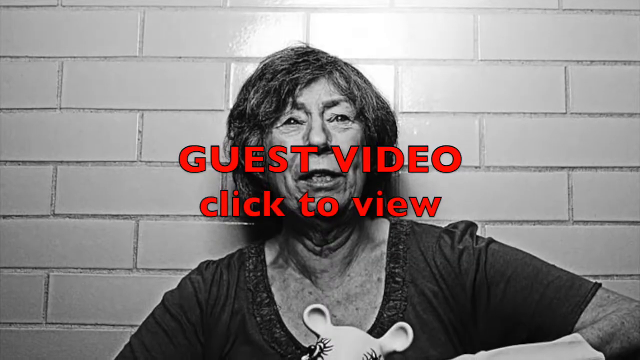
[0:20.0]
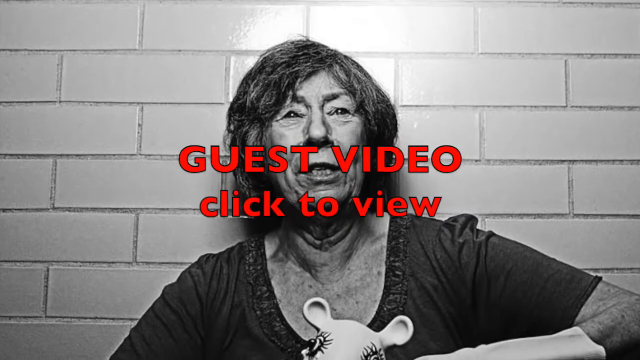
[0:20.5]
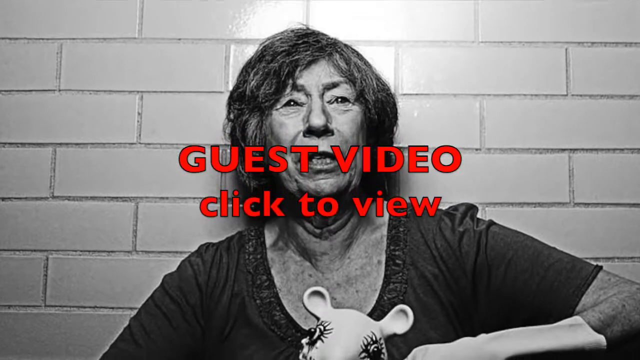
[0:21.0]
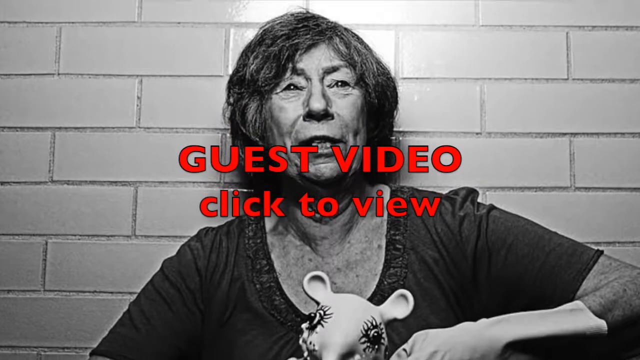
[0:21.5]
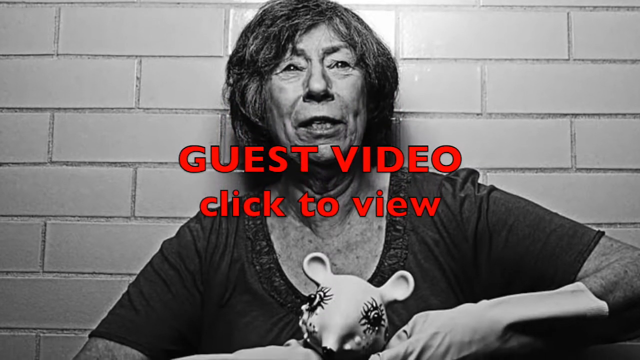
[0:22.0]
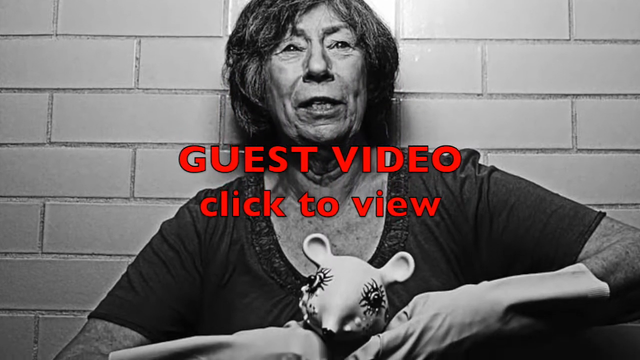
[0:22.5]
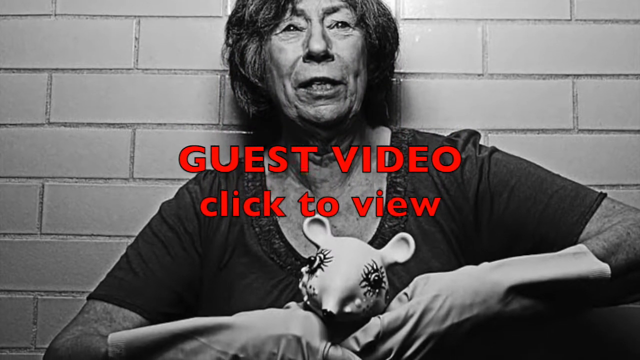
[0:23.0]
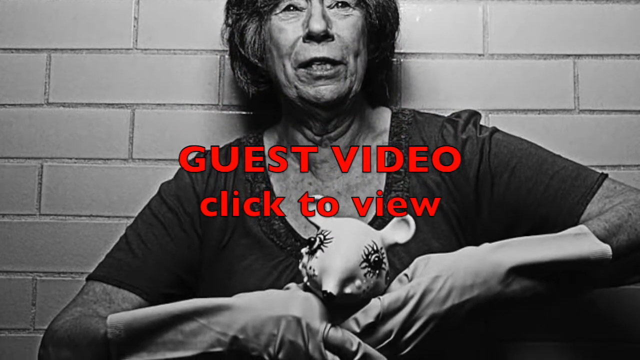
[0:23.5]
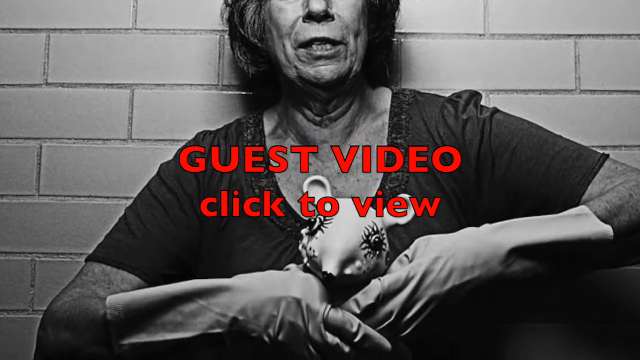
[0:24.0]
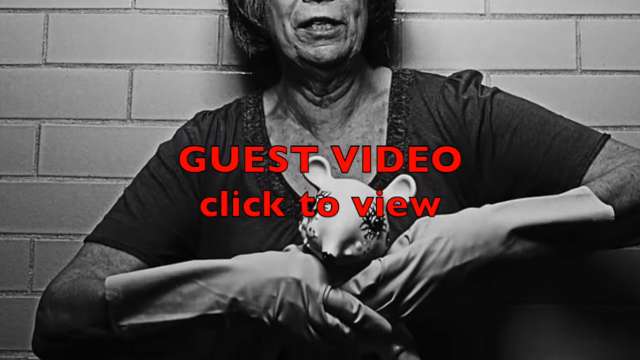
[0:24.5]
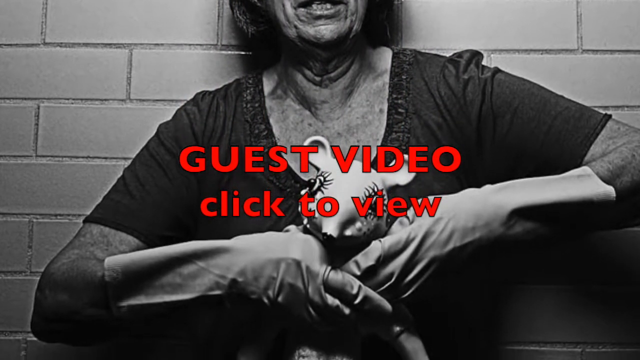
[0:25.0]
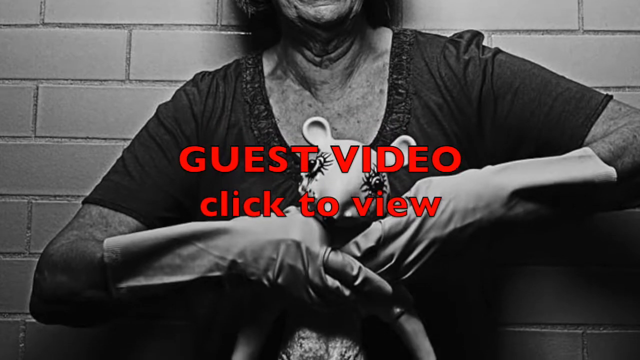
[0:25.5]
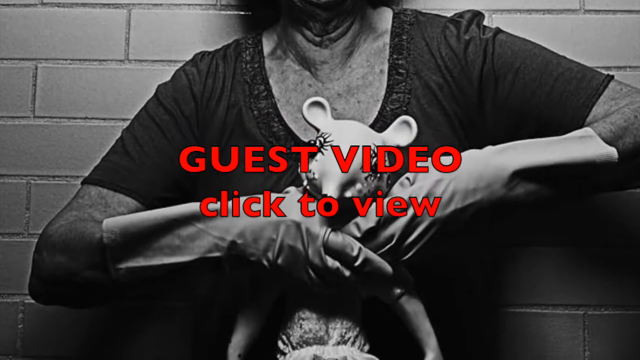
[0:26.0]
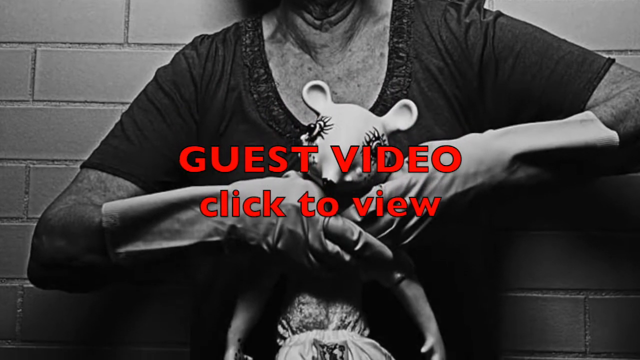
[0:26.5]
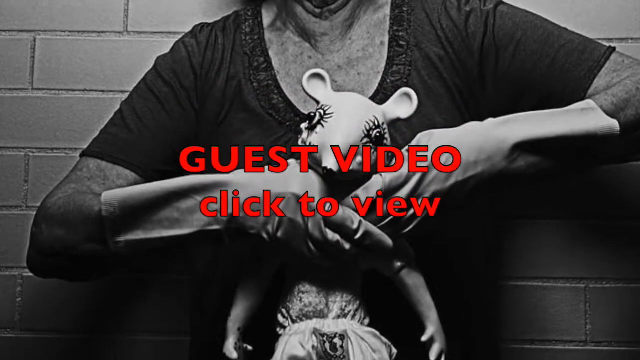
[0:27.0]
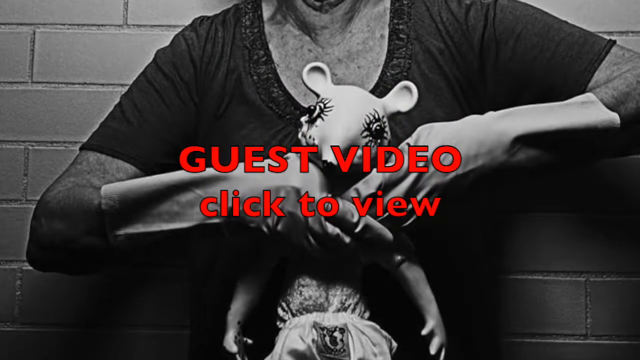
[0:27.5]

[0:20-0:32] An older woman faces the viewer, looking straight ahead and standing up against a wall. She is wearing what look like rubber kitchen gloves and appears to be holding some sort of toy or stuffed animal in front of her. The image is in black and white. The camera moves downward, revealing what she holds: a toy doll that looks like an animal, like a mouse that looks like a human.